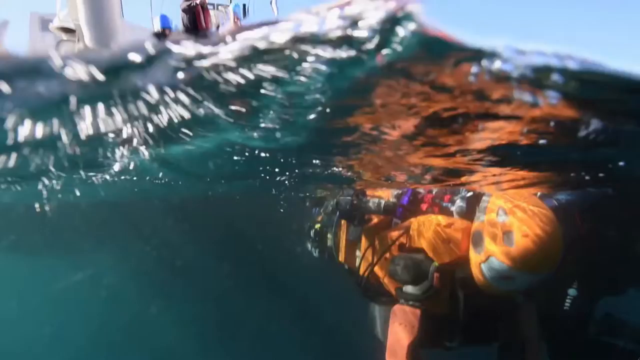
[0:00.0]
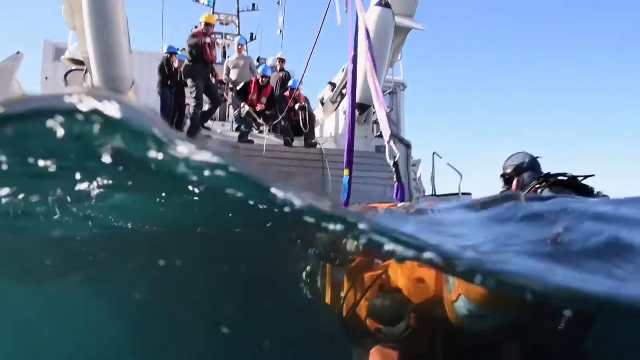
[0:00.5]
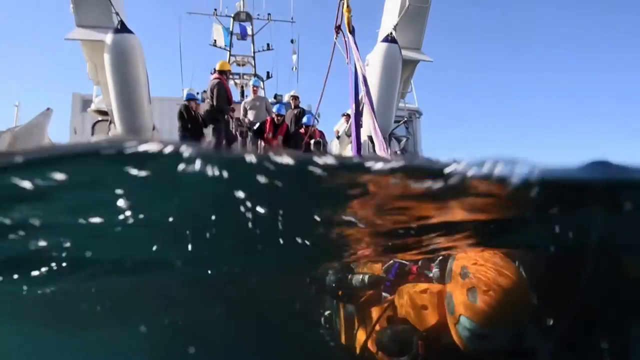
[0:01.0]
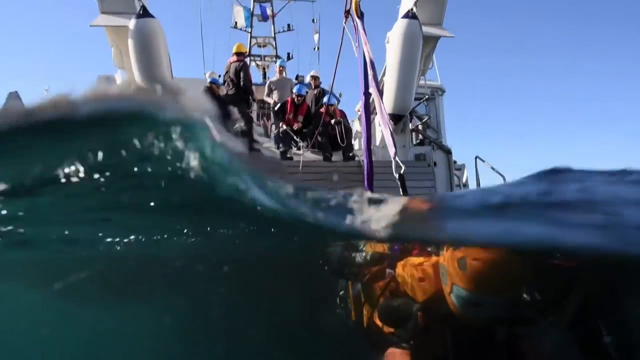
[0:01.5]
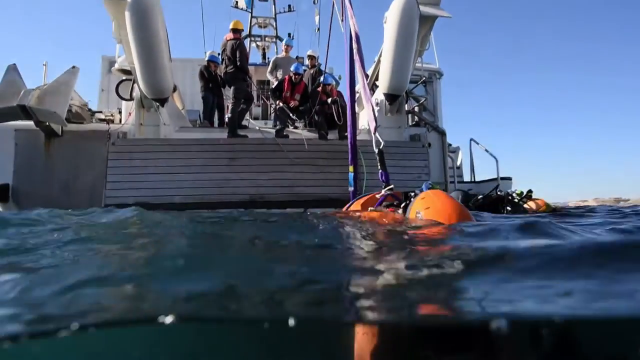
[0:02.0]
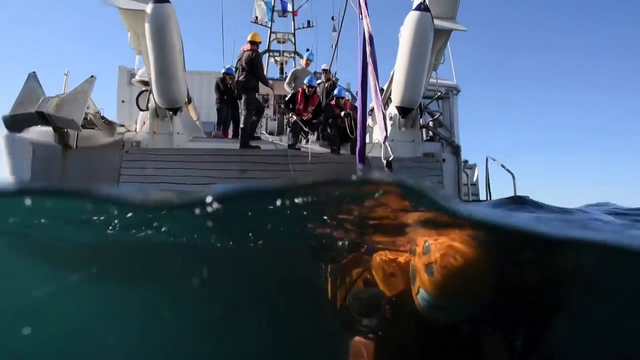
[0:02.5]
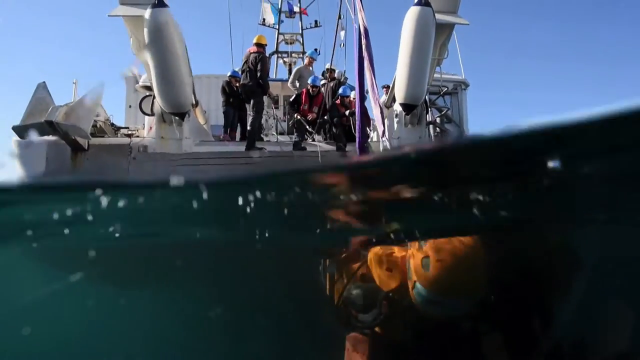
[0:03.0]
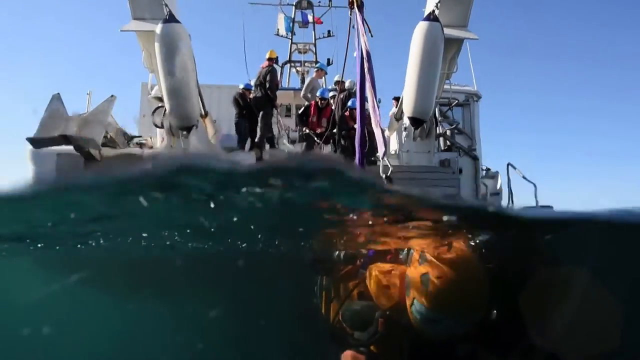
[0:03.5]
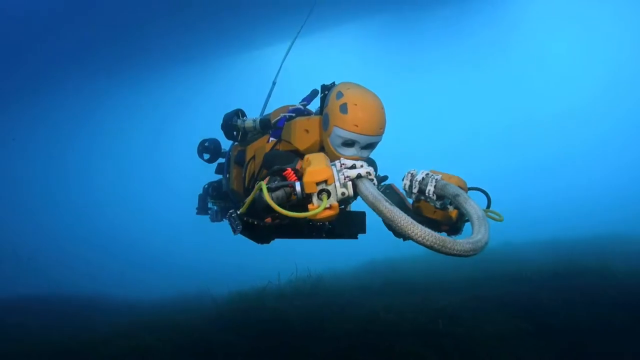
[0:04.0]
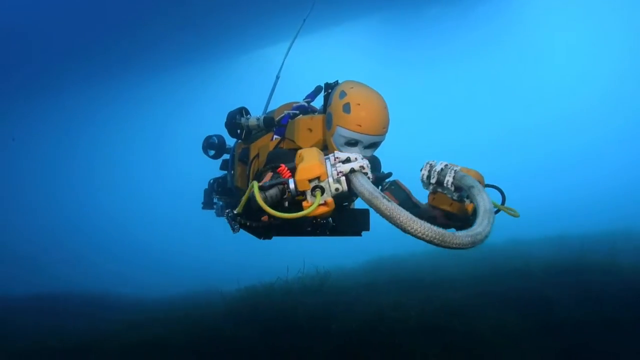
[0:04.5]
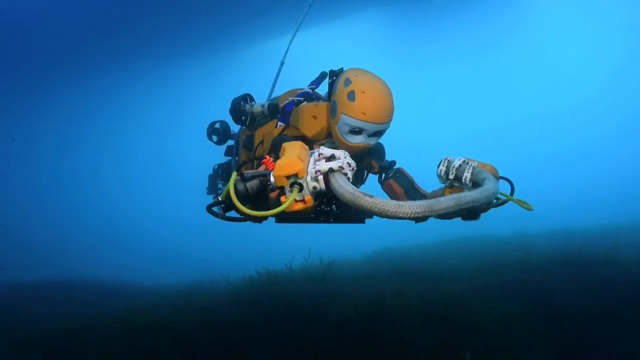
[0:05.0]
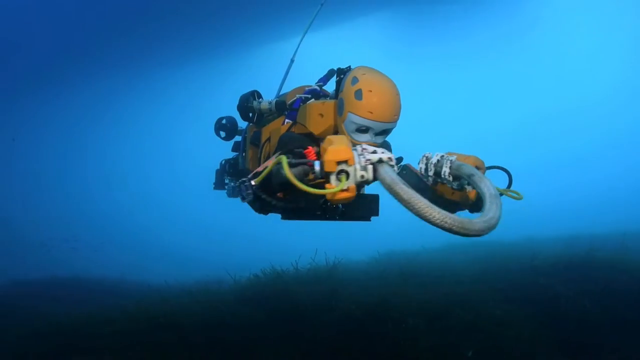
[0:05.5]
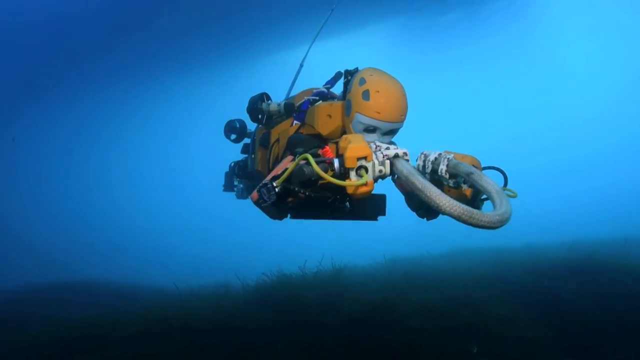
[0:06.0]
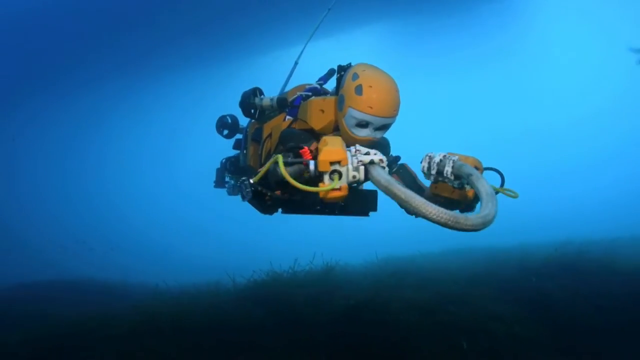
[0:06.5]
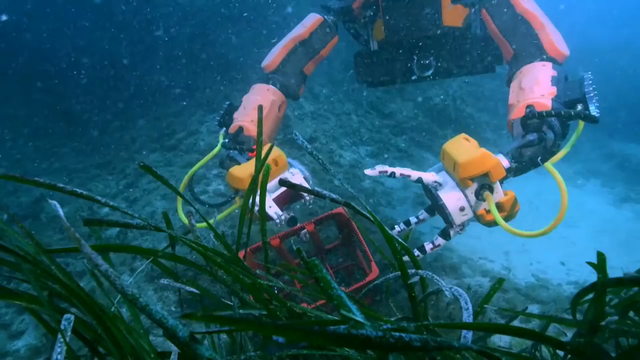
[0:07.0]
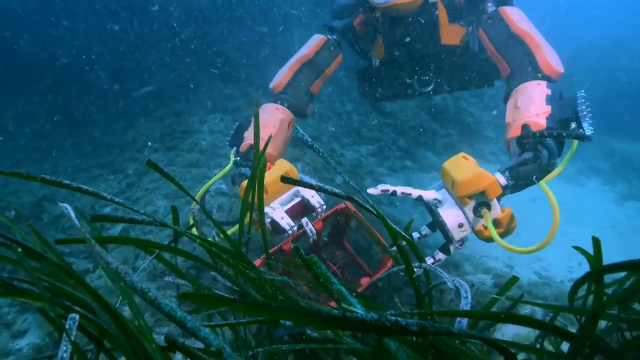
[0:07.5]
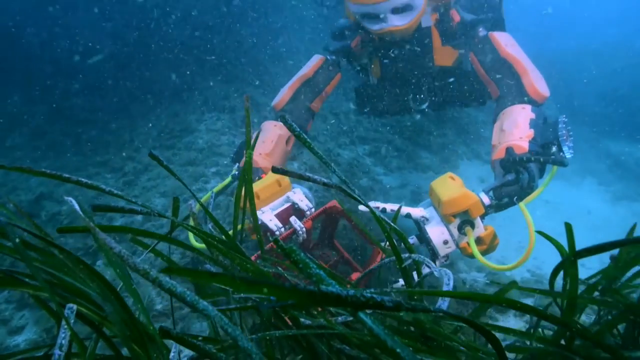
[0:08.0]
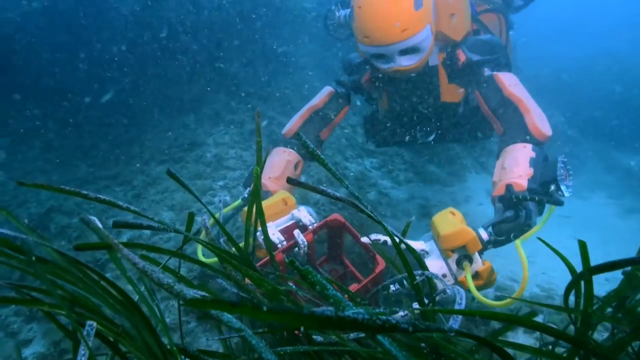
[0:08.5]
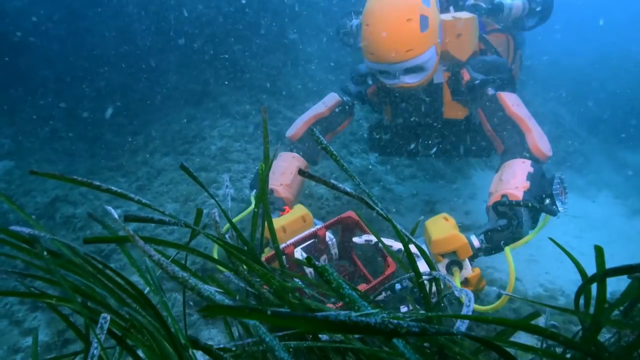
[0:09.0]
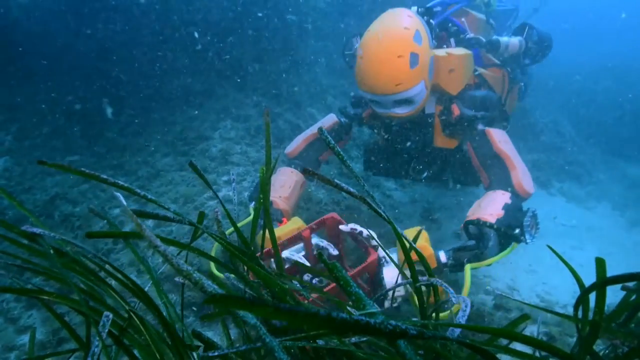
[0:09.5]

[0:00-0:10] The view is in the water, with the camera bobbing up and down in what looks like either the ocean or some type of current. Initially, an orange, humanoid-shaped robot is visible underwater in front of the camera. Above the water is a white boat or pier (it is unclear which), with workers standing on top of it wearing hard hats of varying colors: some blue, a yellow one, and some white. The workers are manipulating equipment extending from the boat and also seem to be communicating with each other. The waves are pretty aggressive, so the camera bobs up and down a lot until the view transitions to the humanoid robot floating underwater and moving its arms just a little. Toward the end, the robot is at the bottom of the body of water, grabbing an item with its silver claws.